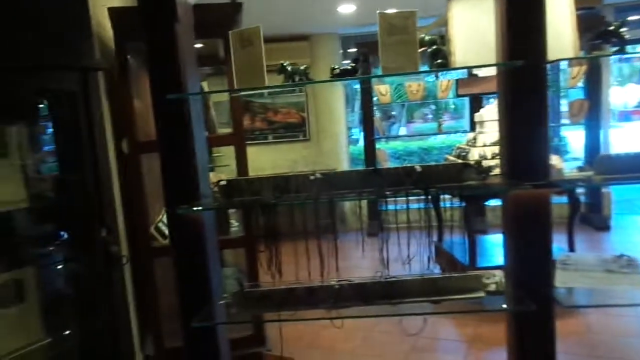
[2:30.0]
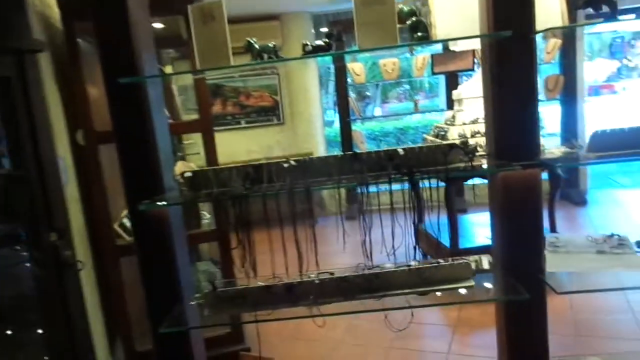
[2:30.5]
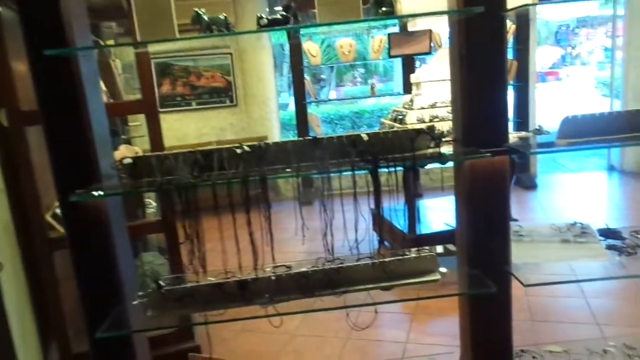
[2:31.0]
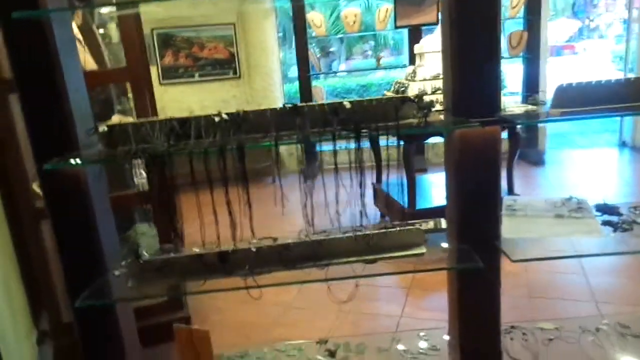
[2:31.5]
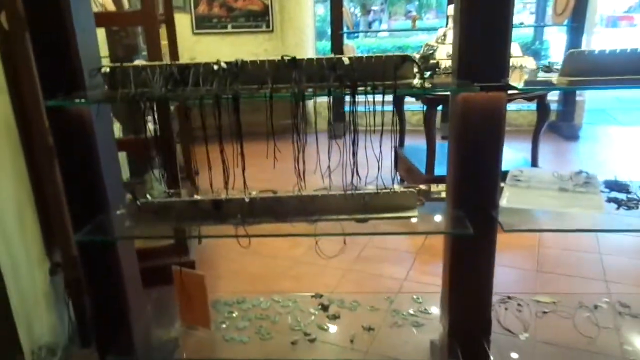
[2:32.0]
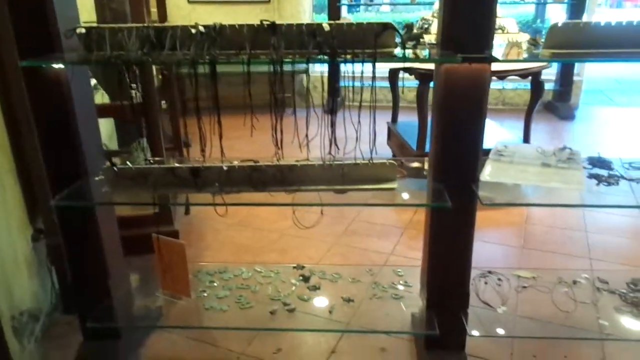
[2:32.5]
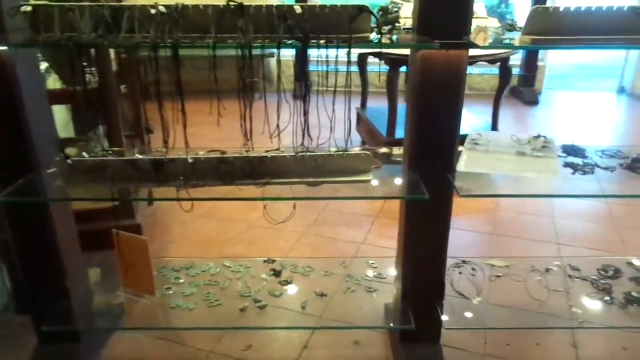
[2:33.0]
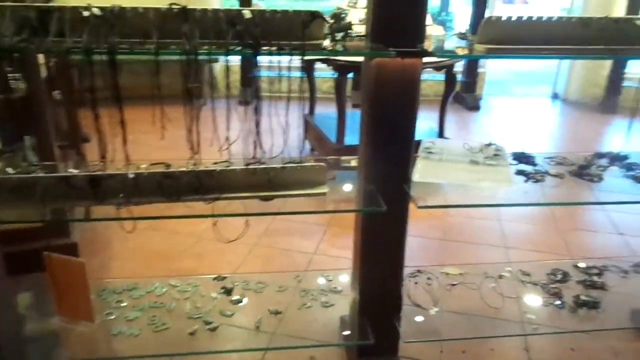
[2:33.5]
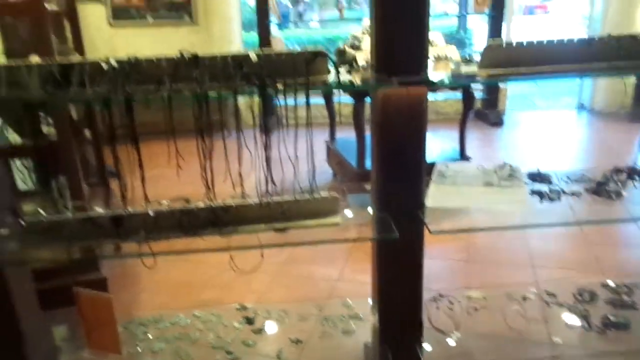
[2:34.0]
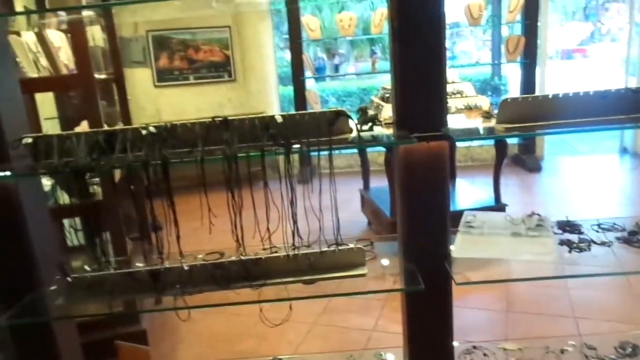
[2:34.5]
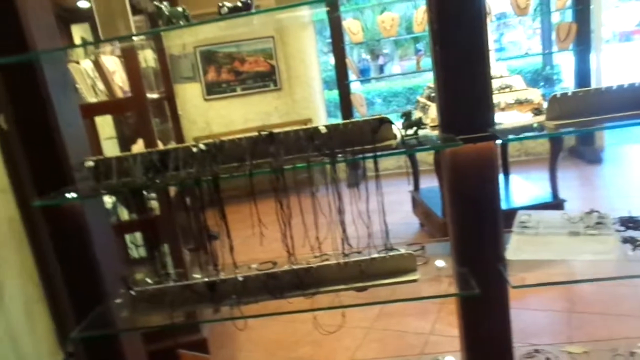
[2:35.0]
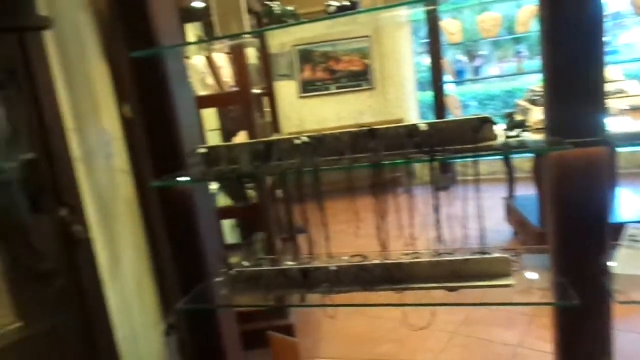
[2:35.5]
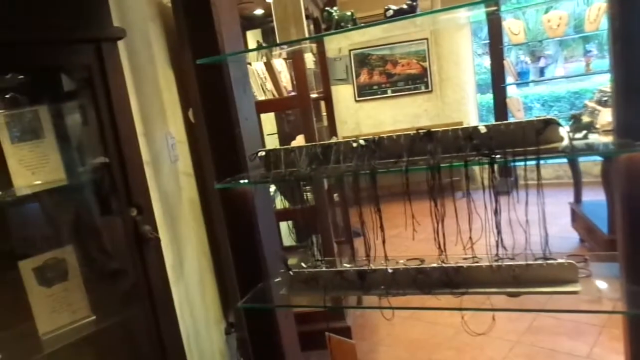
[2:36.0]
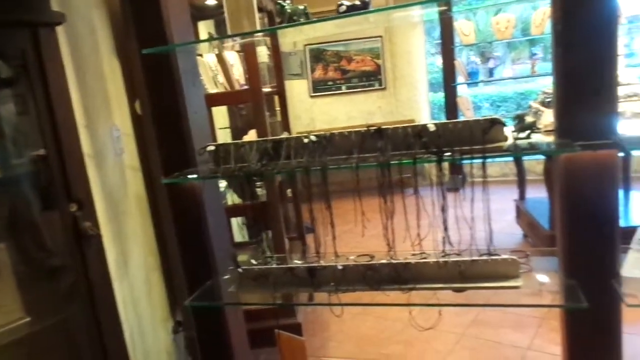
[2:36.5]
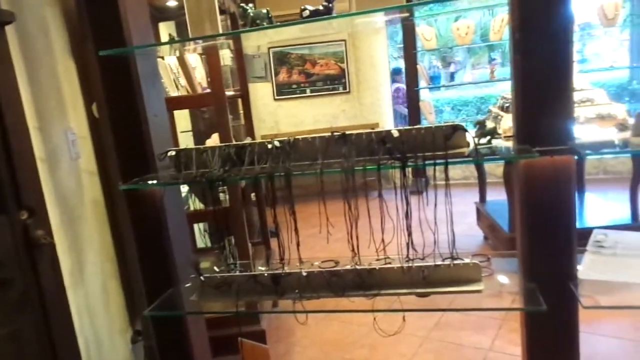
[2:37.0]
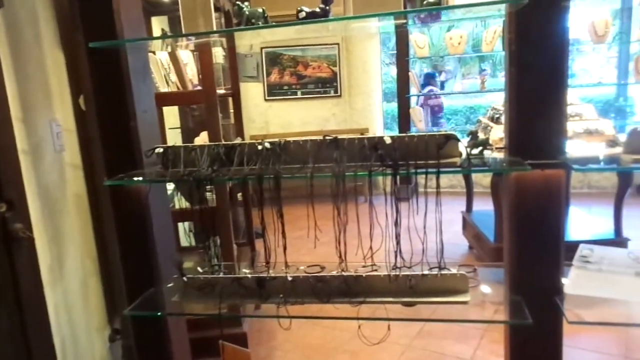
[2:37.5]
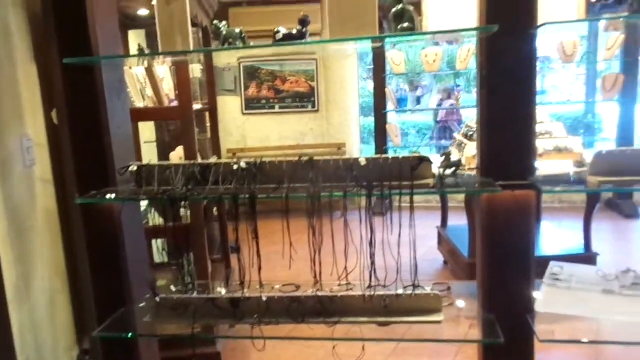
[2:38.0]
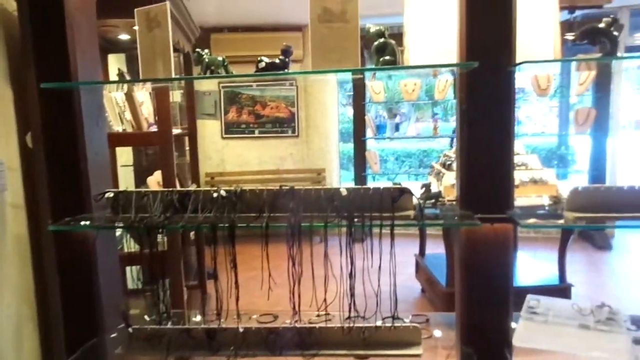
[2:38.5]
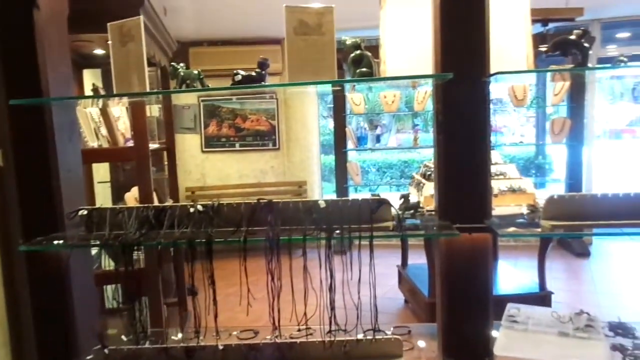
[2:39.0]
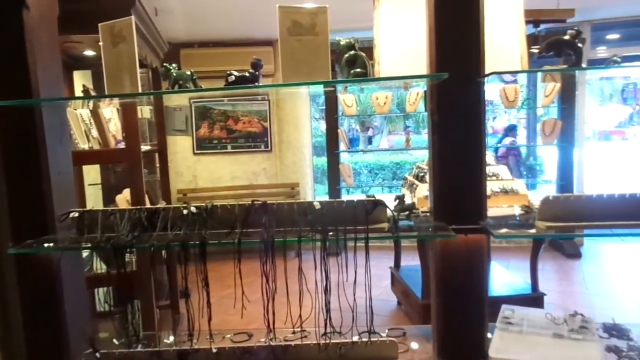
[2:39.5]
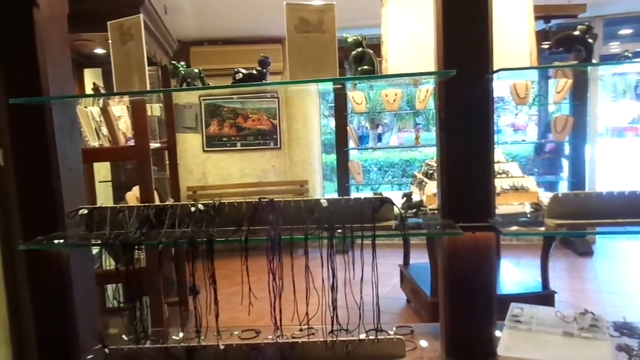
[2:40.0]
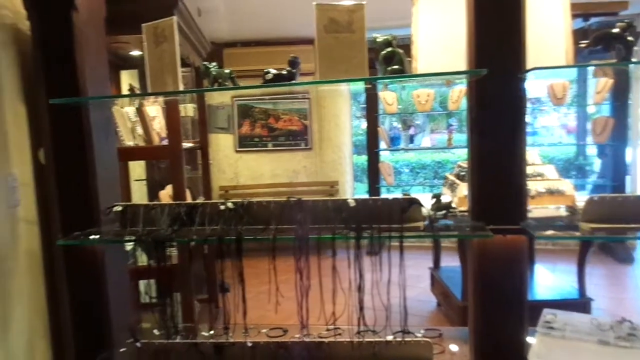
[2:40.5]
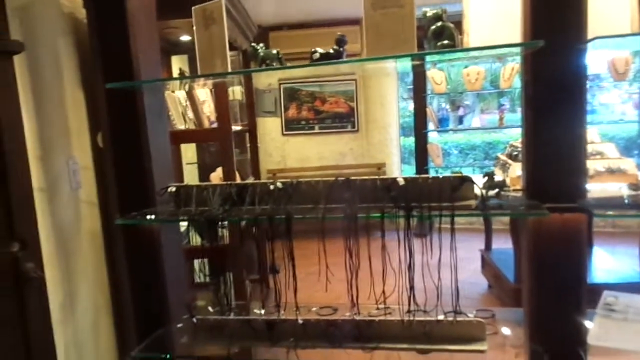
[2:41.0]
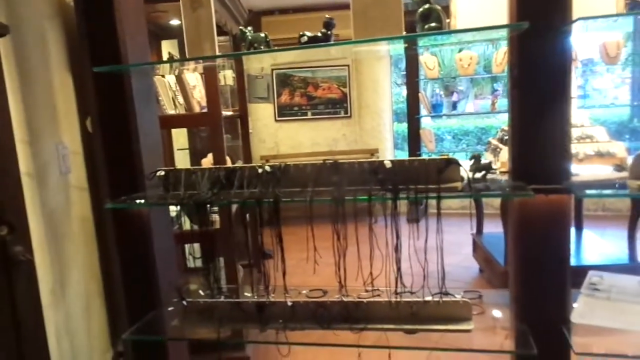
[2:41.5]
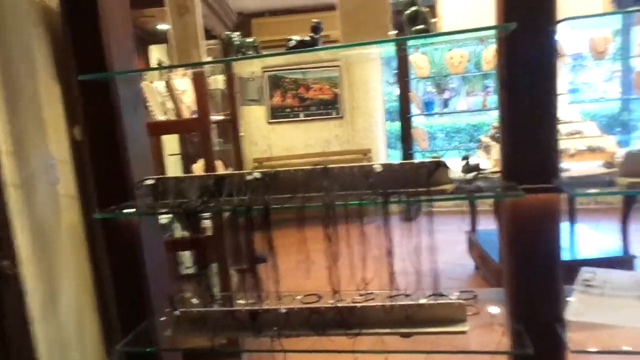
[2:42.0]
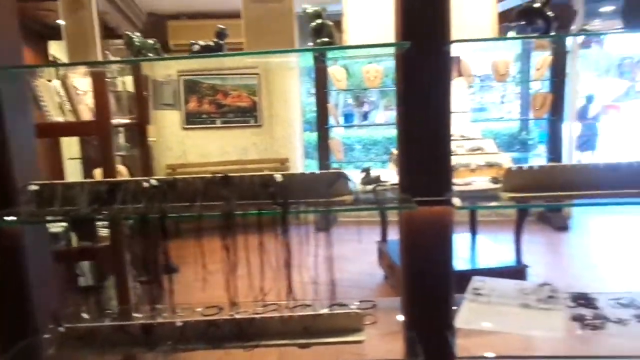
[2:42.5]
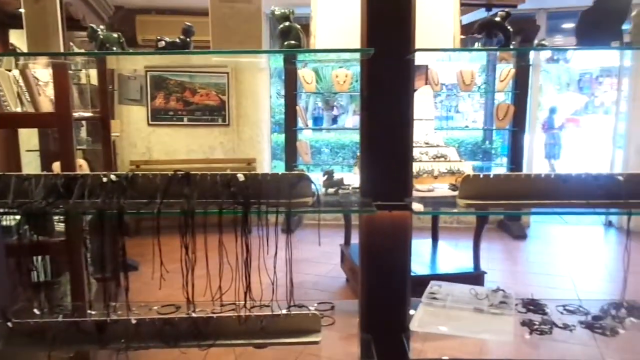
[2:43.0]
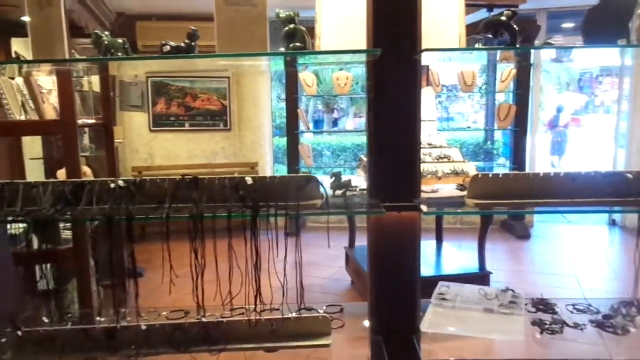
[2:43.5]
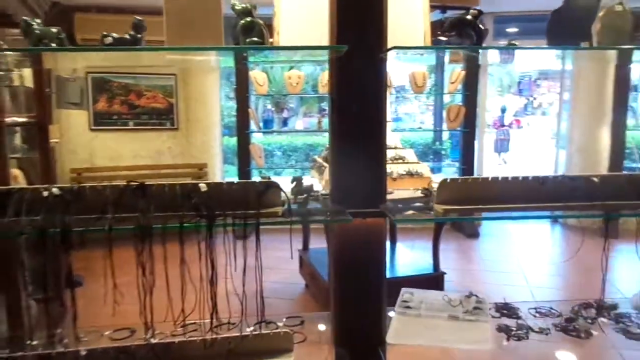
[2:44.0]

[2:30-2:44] The place looks like a museum. Glass, hair or something is hanging up, and someone walks by the window outside.